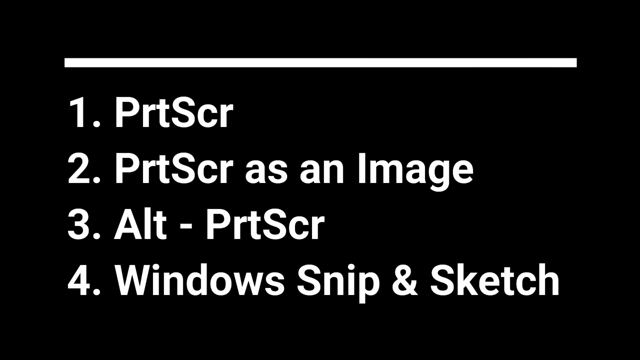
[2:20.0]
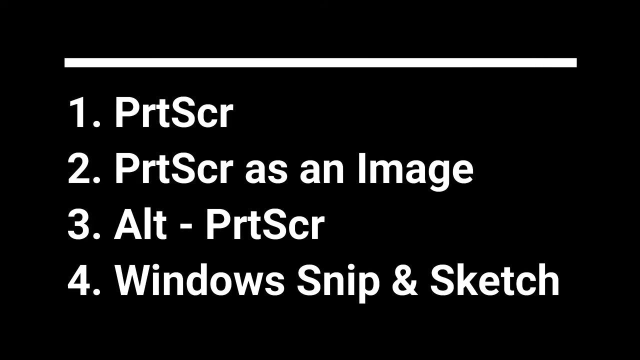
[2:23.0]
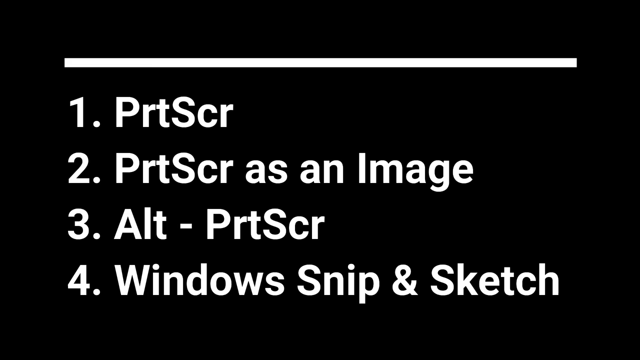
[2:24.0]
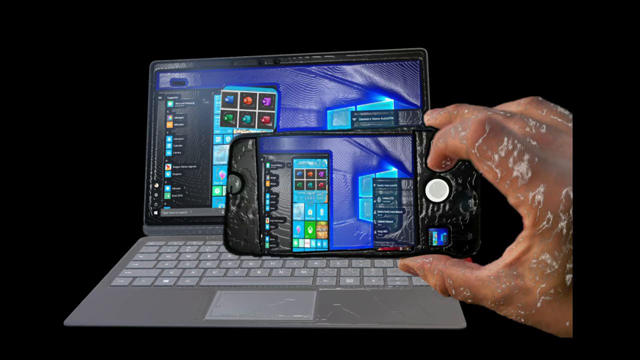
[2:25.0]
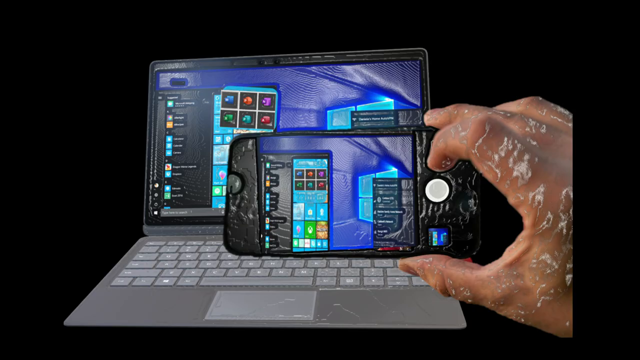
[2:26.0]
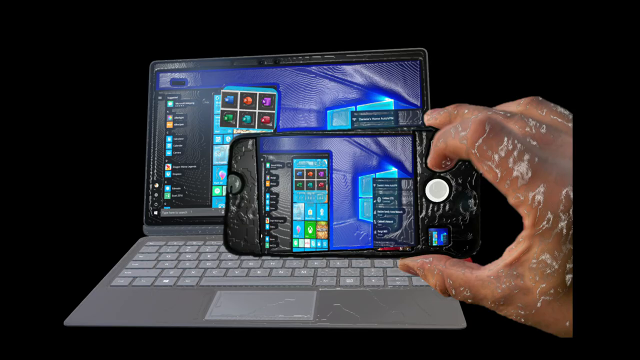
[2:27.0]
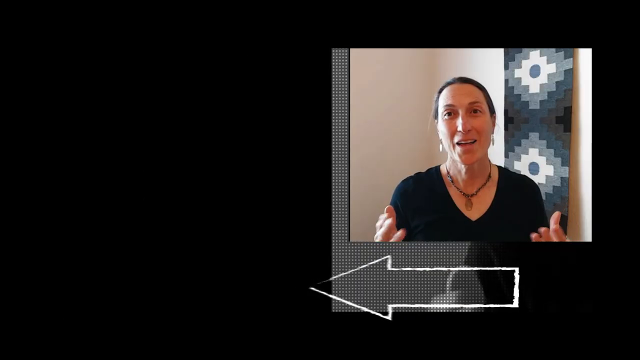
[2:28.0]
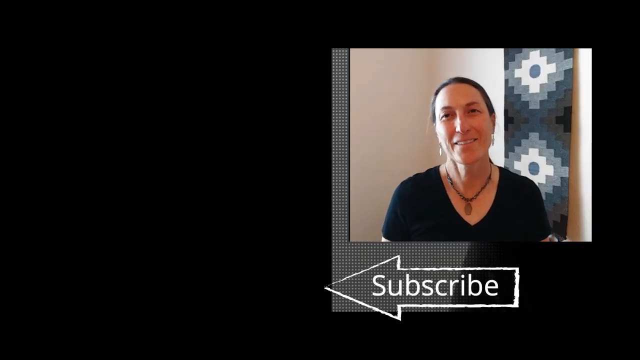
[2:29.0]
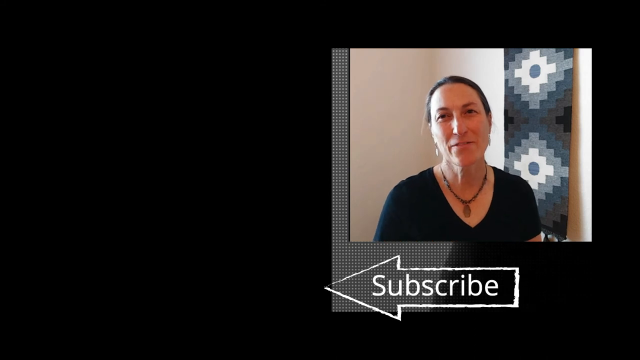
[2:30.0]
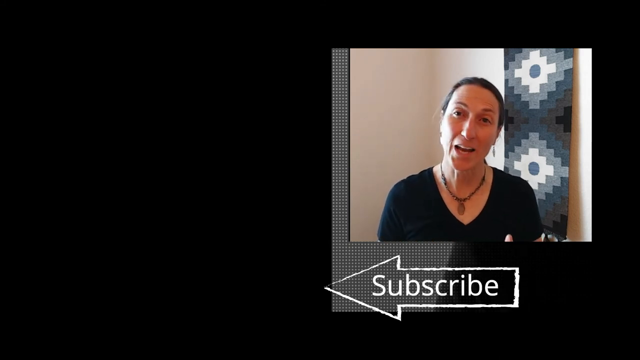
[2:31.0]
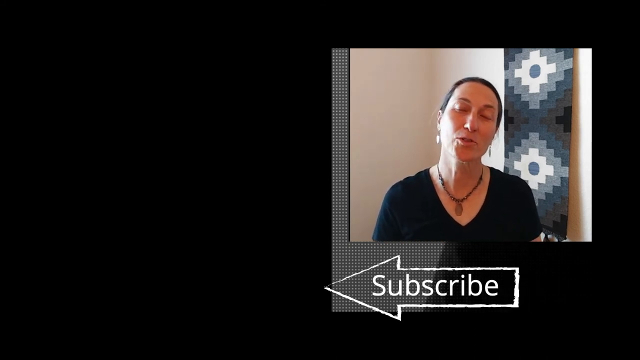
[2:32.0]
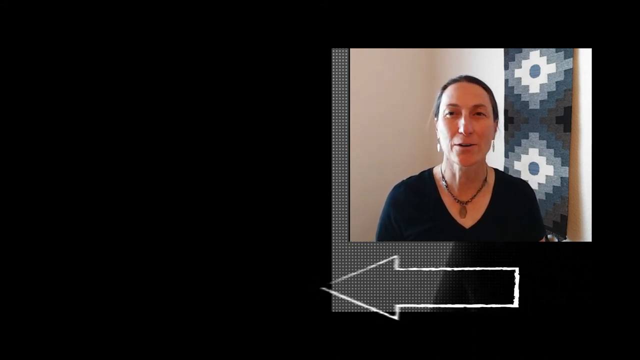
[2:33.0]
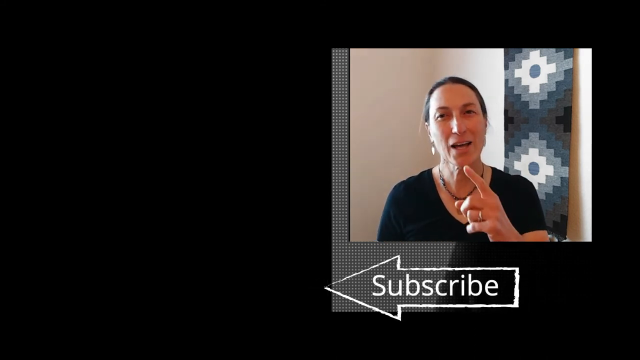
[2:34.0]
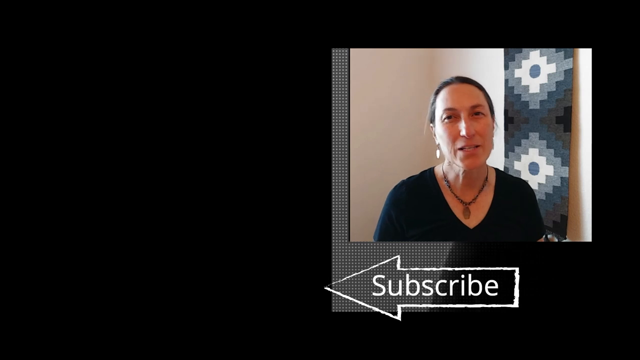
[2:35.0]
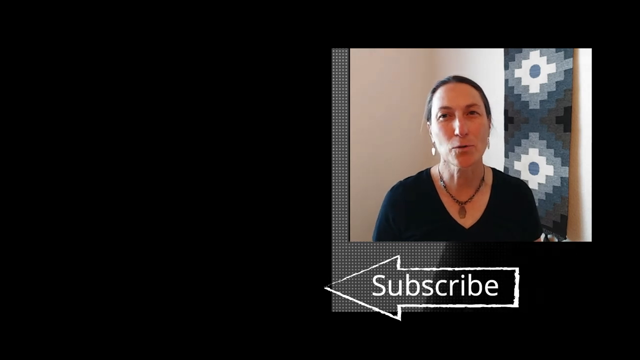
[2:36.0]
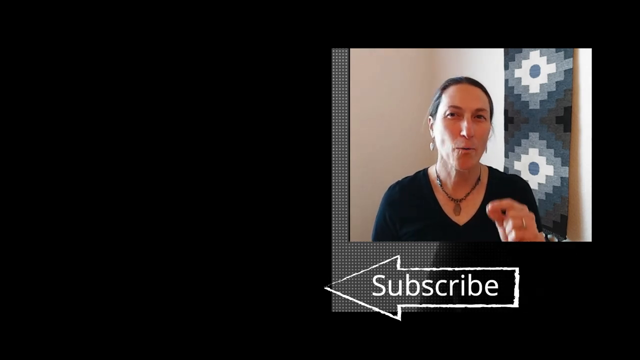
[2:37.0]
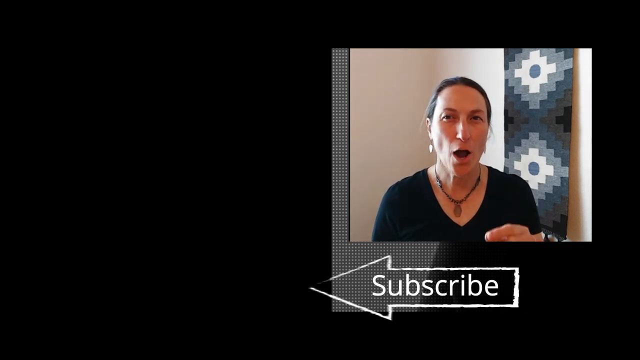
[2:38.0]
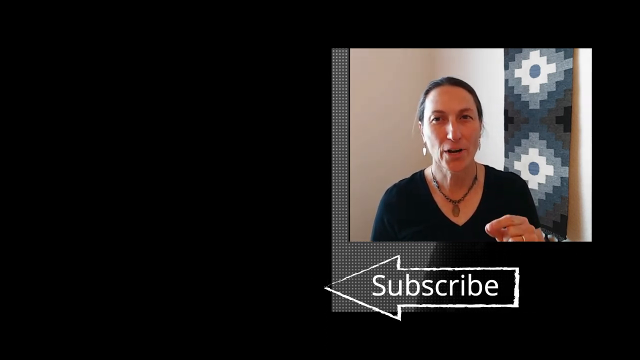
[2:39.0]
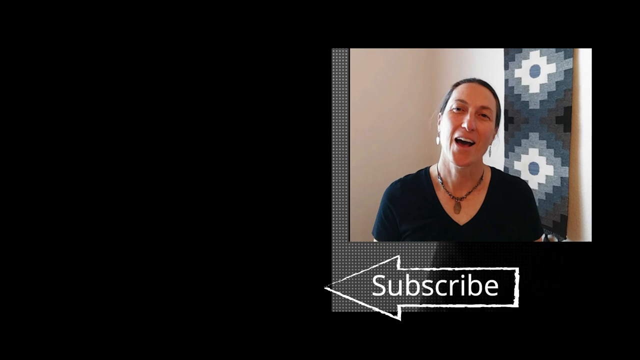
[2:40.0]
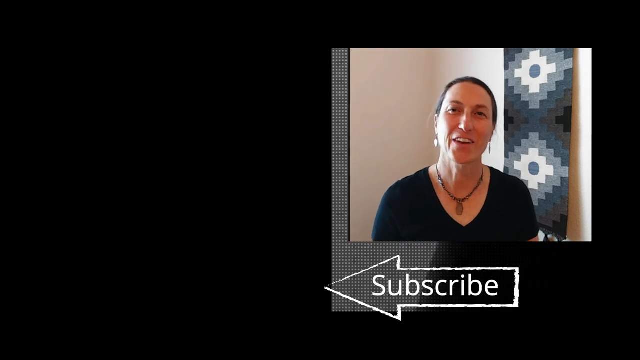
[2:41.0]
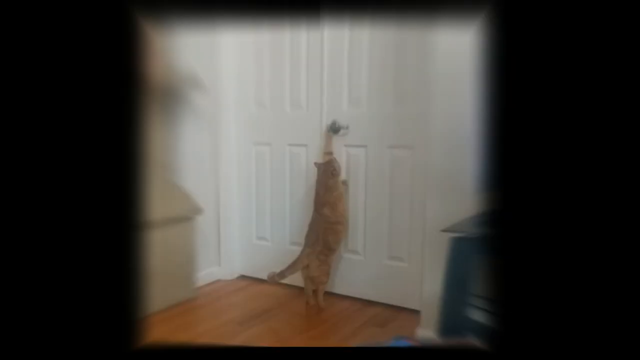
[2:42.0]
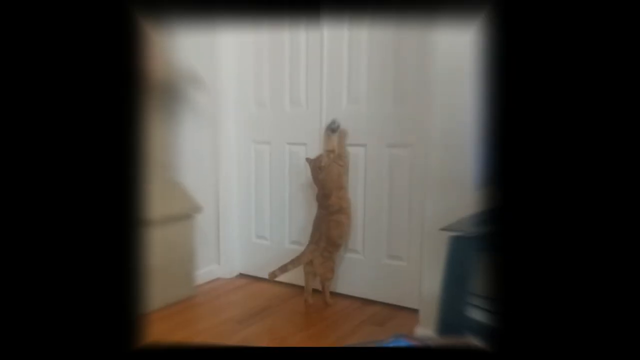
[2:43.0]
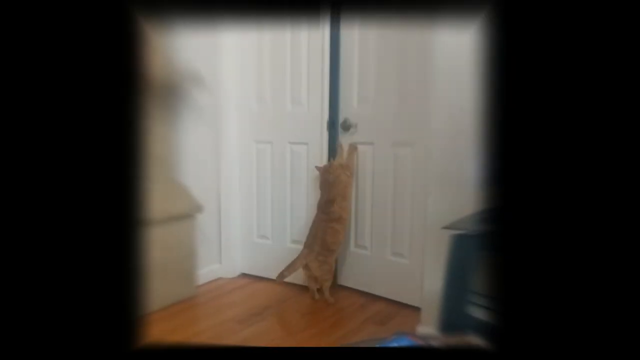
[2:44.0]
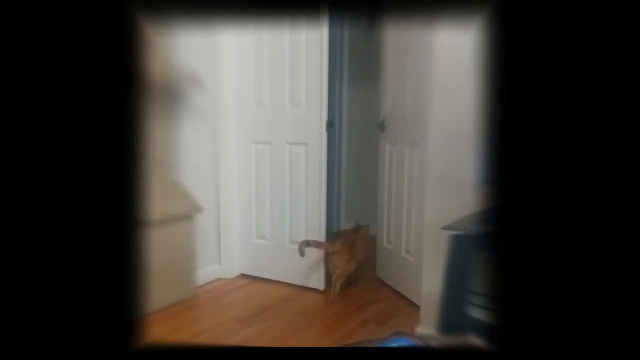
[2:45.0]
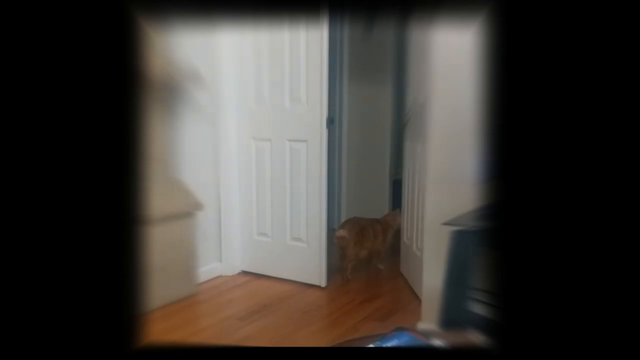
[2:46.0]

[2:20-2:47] The black screen with the thick white line reads "1. PRT SCR, 2. PR2 SCR as an image, 3. ALT-PRT SCR, 4. window snip and sketch," all in white font with a period after every number. The video returns to the images shown earlier with a black screen: a laptop with a phone directly in front of it, showing the same image on both, and a hand holding the phone with two fingers while the pointer finger taps; the hand looks like its skin is peeling off. After a black screen, a recording of a woman pops up. She looks to be in her 50s, with her hair pulled back in a low ponytail, and wears a black t-shirt, a necklace with a pendant, and dangling earrings. She is in front of a wall with some type of patchwork quilt design, uses her hands to talk, and has a wedding ring on. An arrow pops up to subscribe. Then a clip shows white closet doors and an orange cat trying to open them, with wood floors visible; the image appears a little hazy.